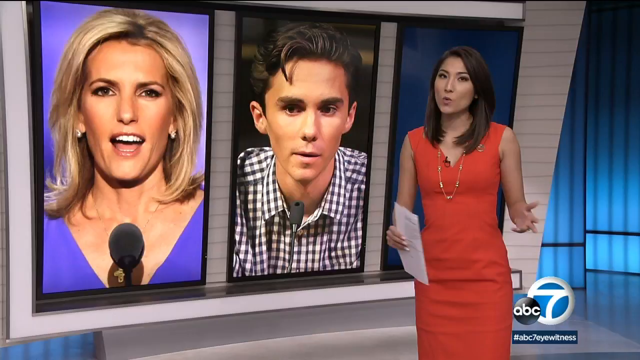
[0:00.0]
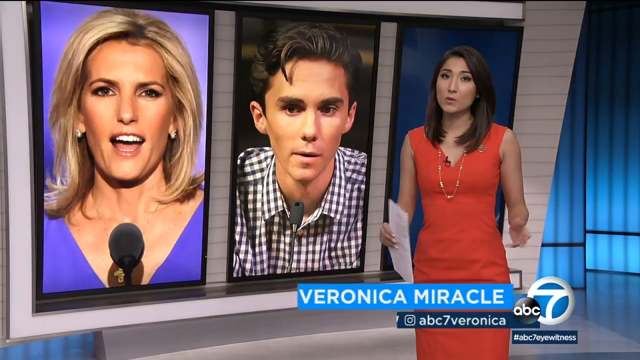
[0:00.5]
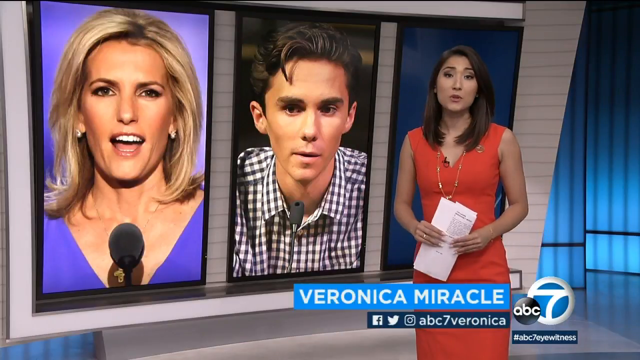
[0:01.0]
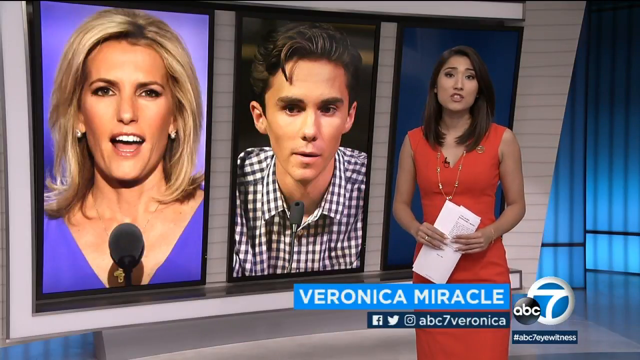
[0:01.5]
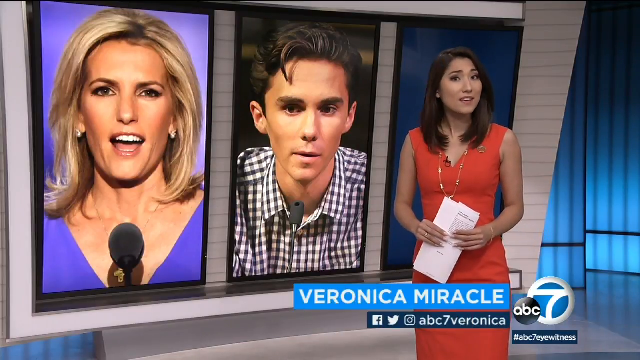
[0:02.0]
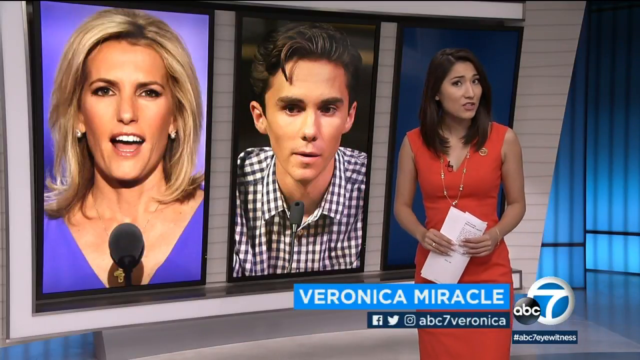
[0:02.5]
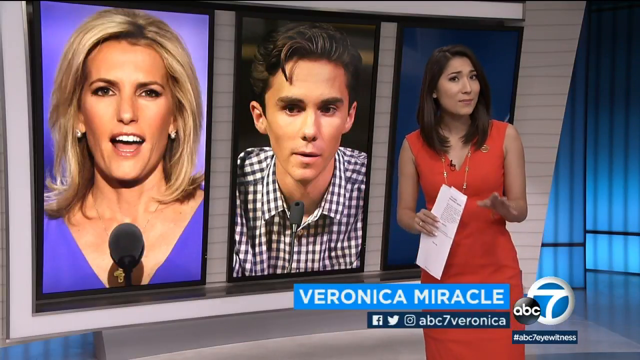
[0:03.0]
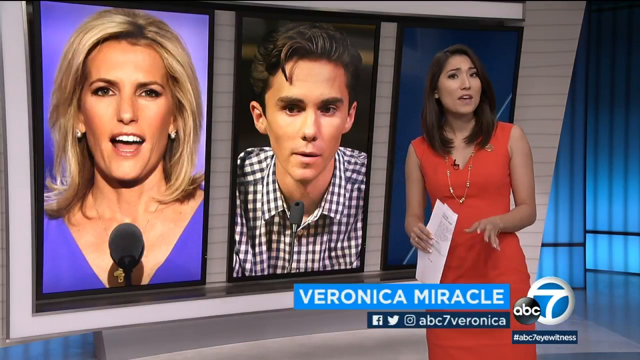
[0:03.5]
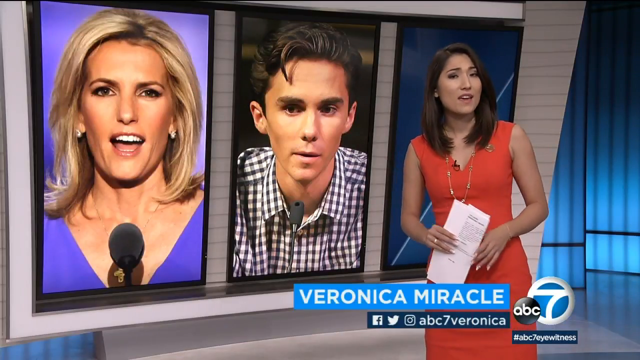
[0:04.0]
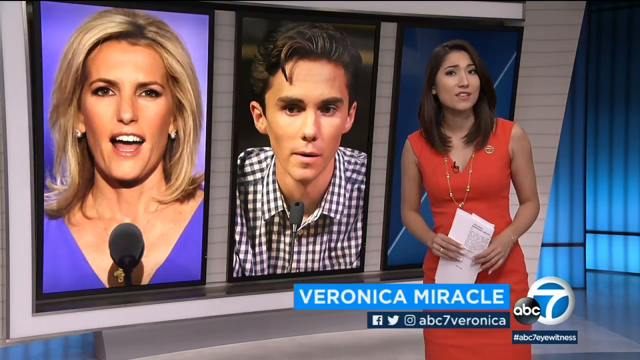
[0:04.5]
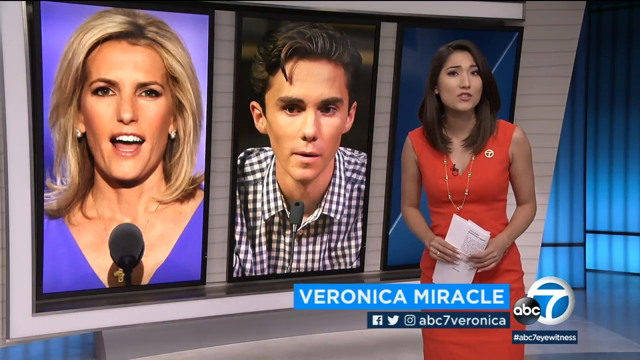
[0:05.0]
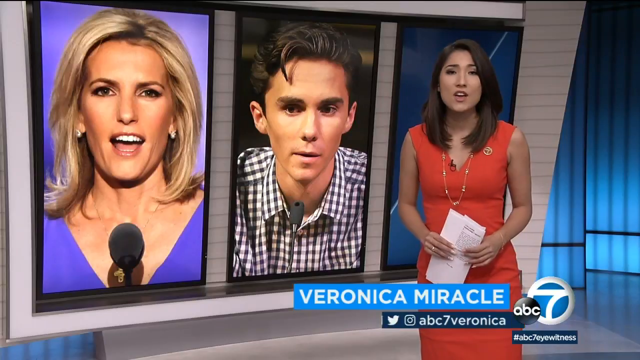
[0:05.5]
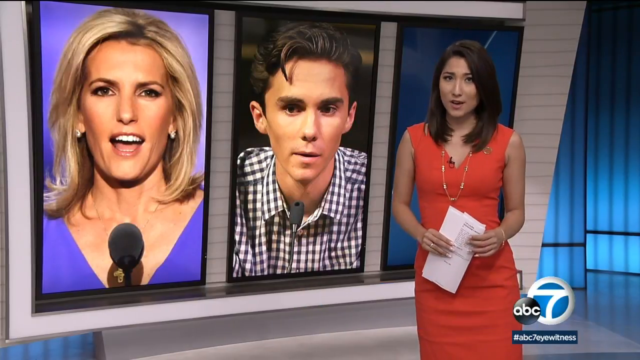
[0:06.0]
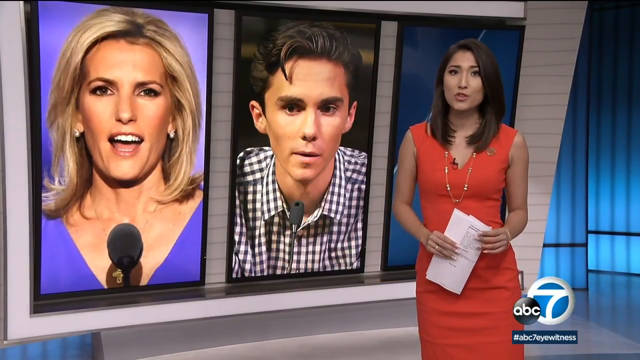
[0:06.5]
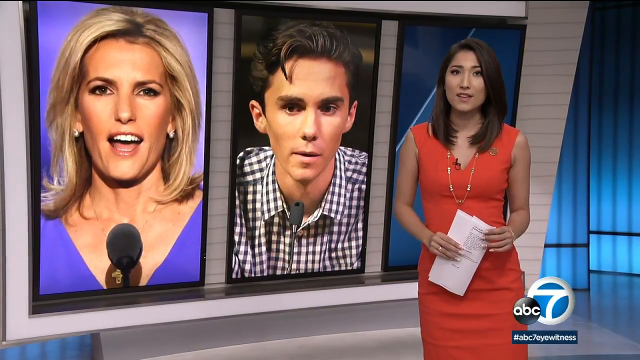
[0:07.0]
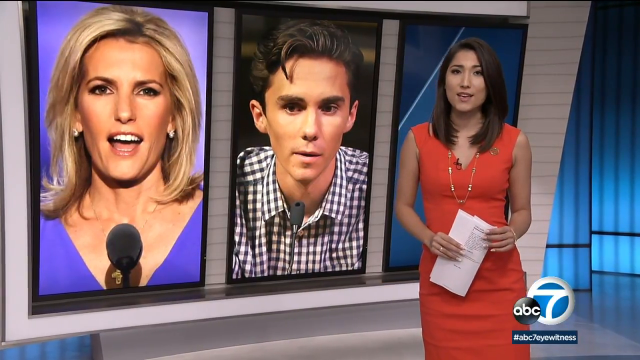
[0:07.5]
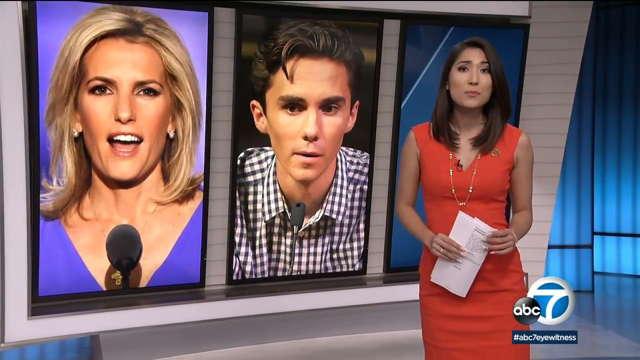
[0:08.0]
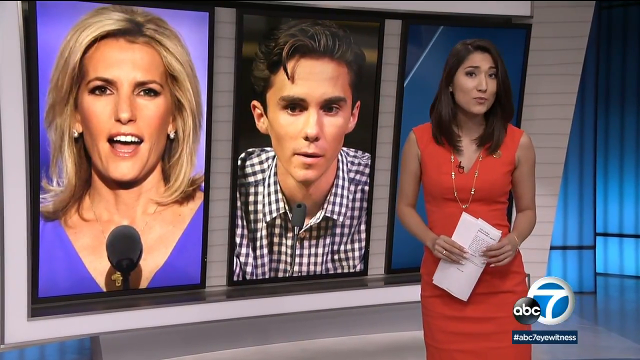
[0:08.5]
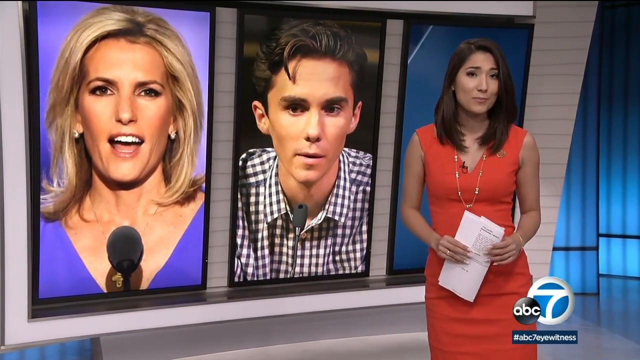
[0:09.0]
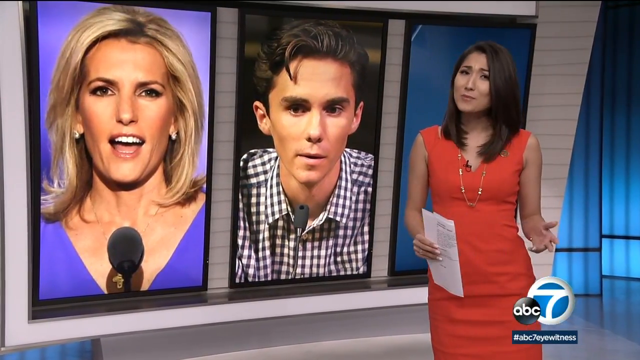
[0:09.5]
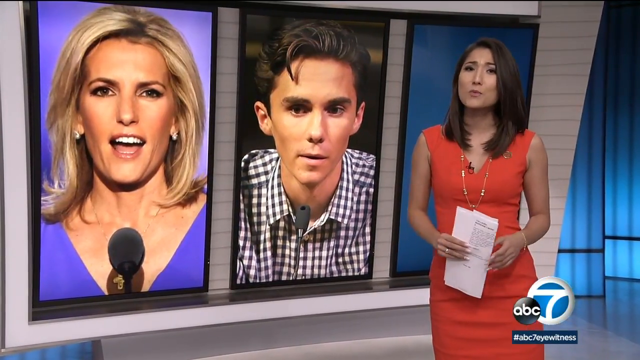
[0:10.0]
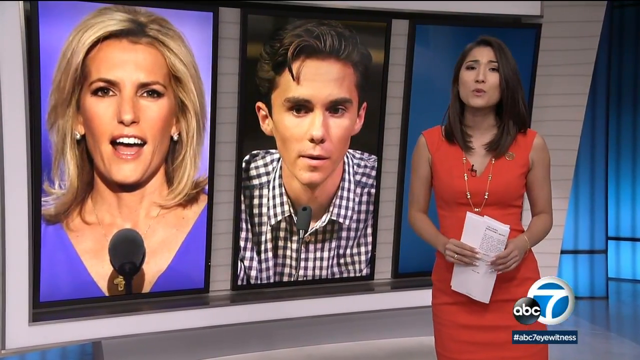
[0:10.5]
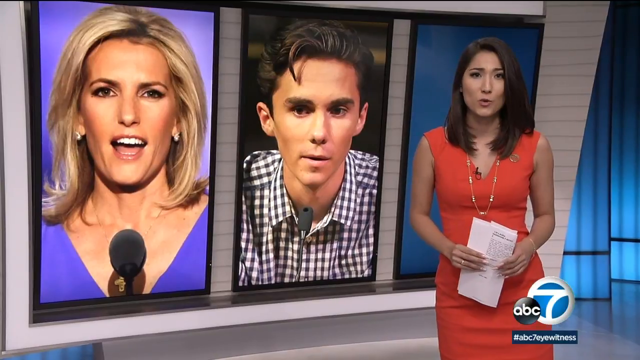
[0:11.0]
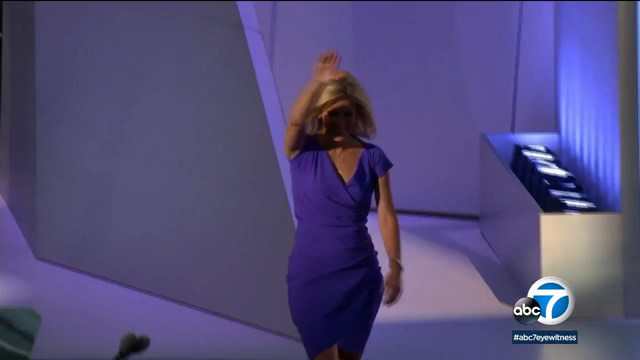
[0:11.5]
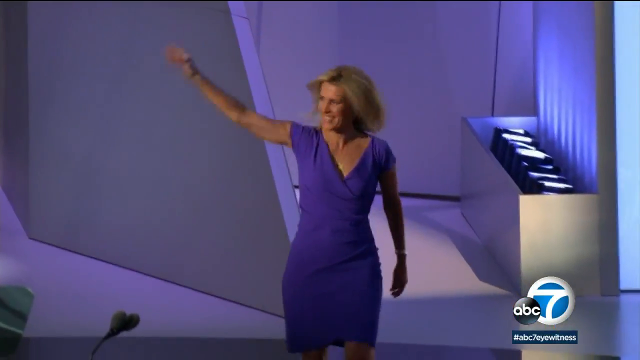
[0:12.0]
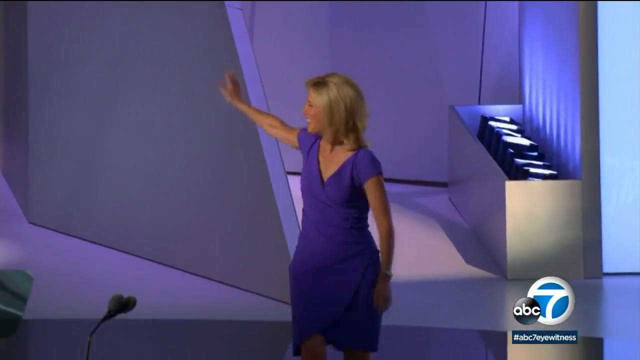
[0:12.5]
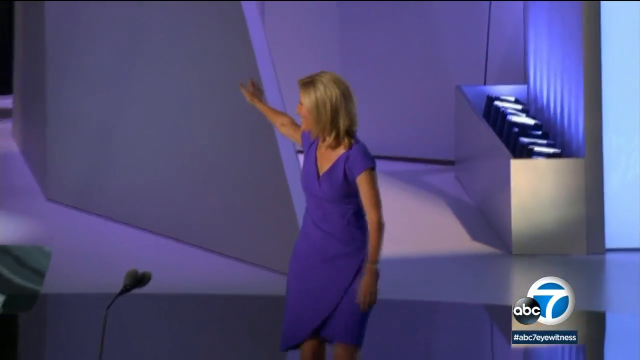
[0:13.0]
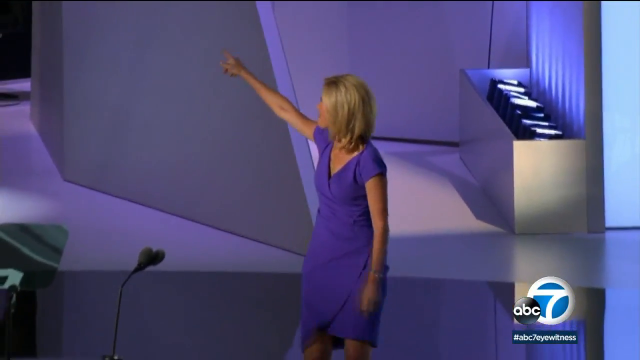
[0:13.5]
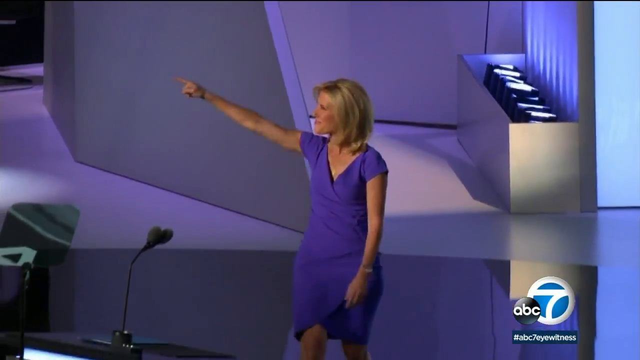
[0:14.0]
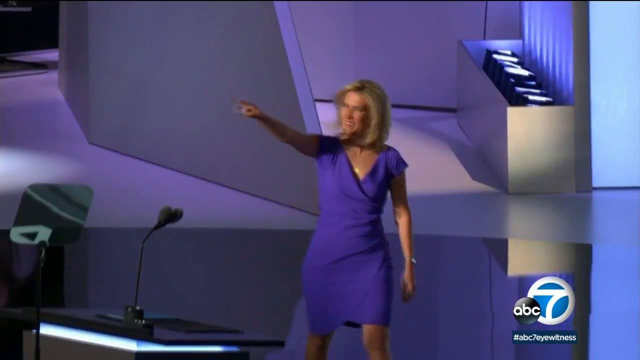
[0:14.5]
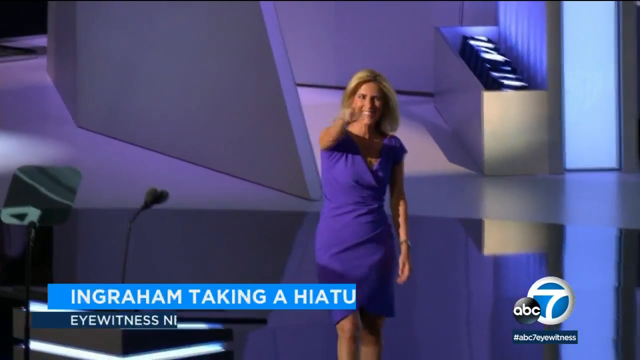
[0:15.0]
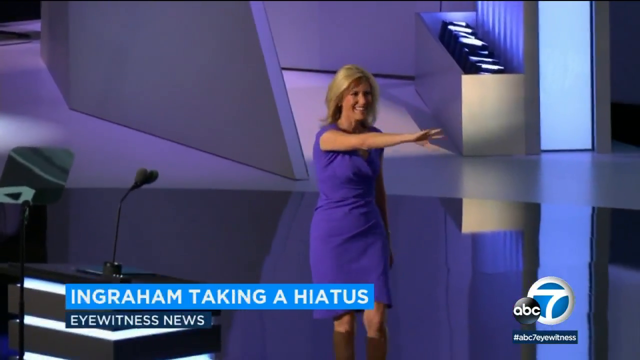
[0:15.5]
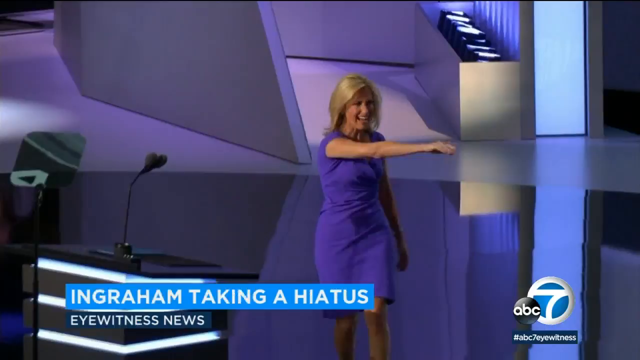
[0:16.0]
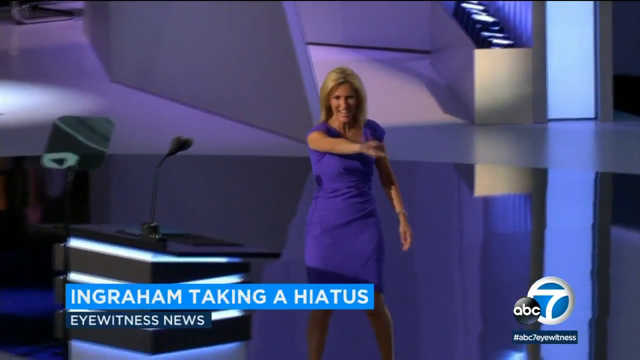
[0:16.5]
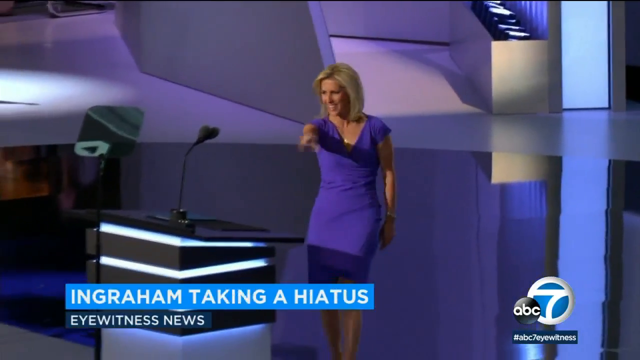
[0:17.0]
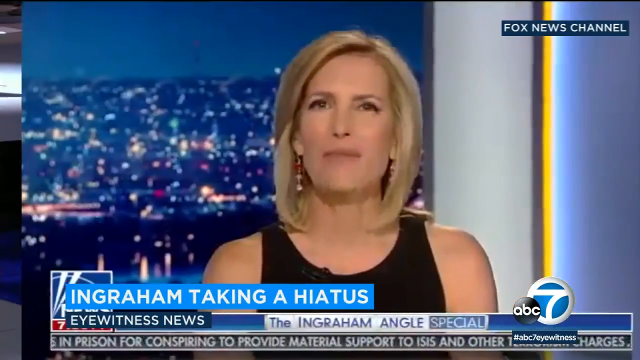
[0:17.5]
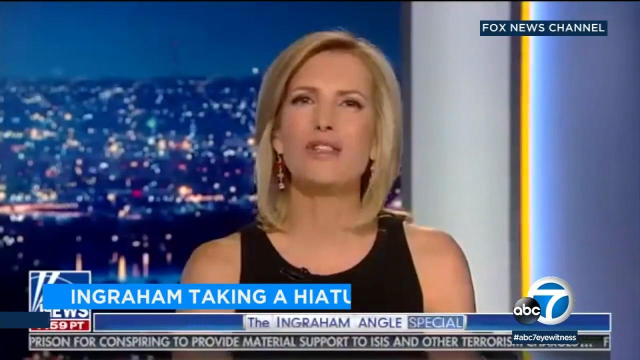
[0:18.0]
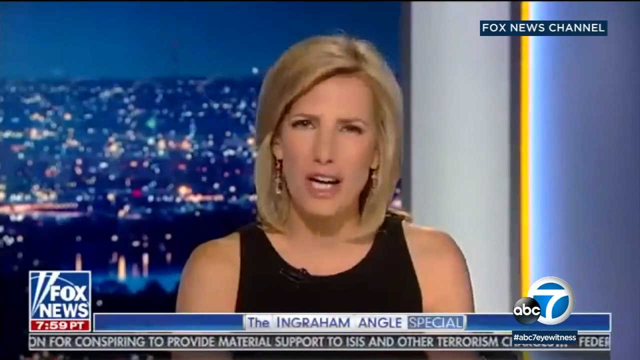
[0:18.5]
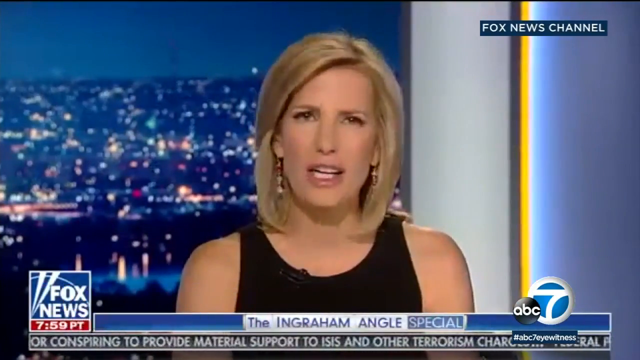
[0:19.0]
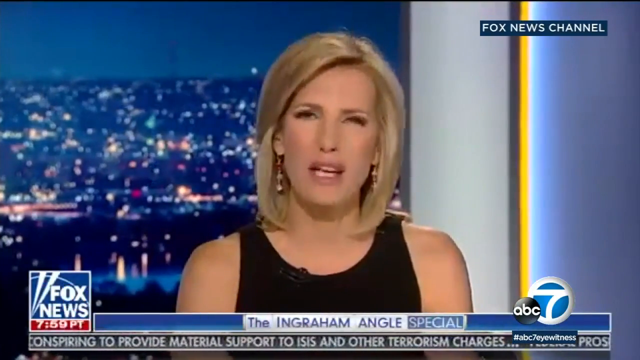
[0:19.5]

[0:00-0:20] A person reporting the news wears a red dress and a necklace and holds a white paper. Behind her, two people are shown in pictures. The lady wears a dress, has gold hair, and looks like a singer. The man wears a black and white t-shirt with squares, has black hair, and has a mic in front of him. The lady walks in, raising her hand and smiling; her name is Ingraham. Another lady in a black dress with gold hair is then shown on the screen. The lady in the red dress and chain is named Veronica Marie Curran.